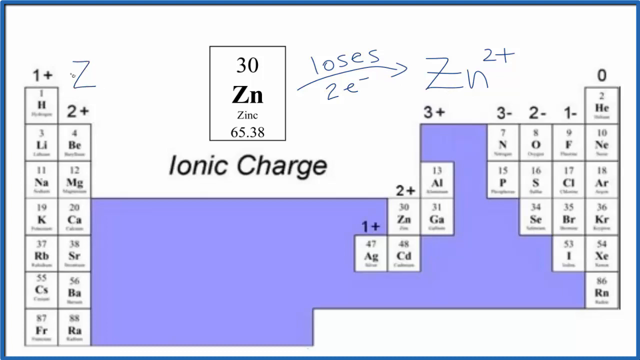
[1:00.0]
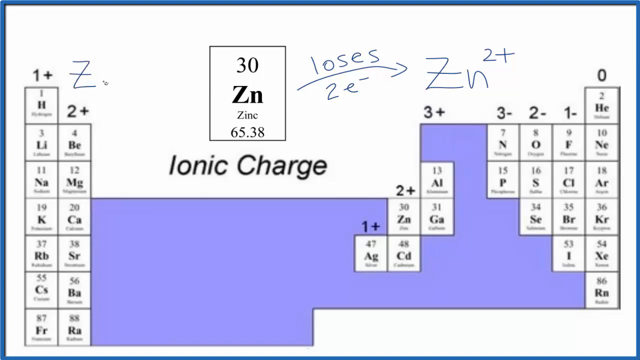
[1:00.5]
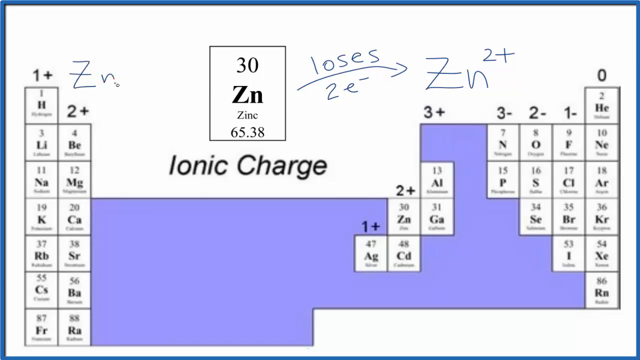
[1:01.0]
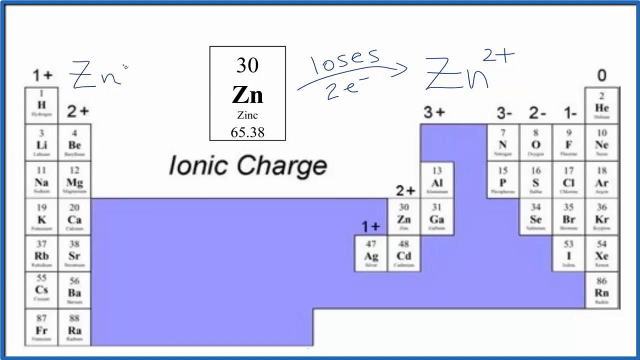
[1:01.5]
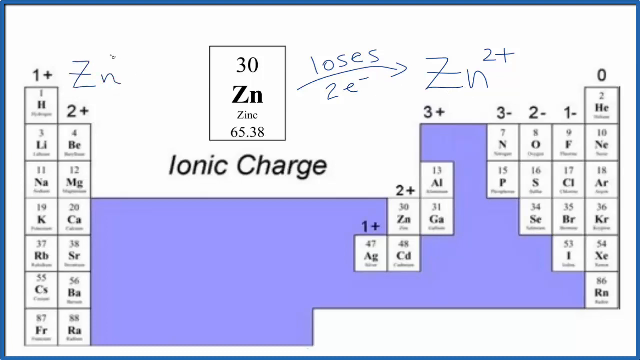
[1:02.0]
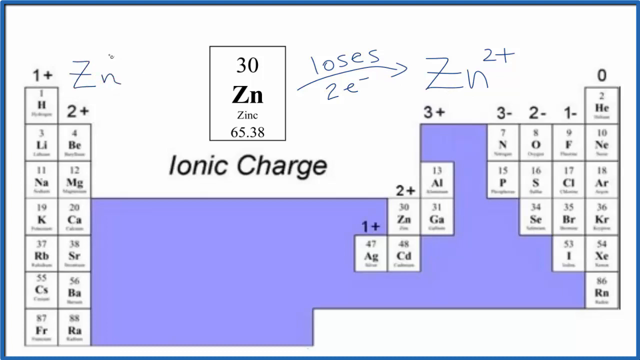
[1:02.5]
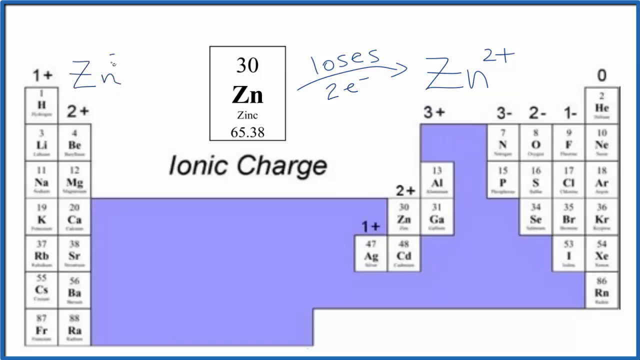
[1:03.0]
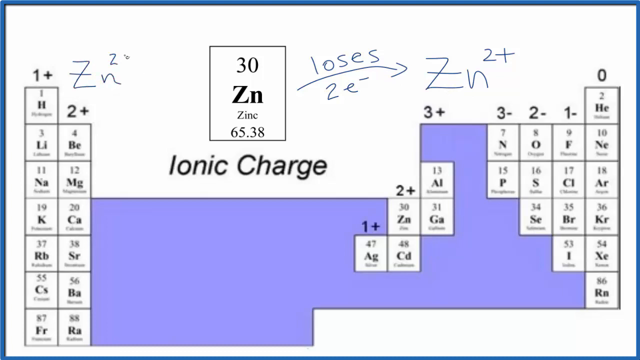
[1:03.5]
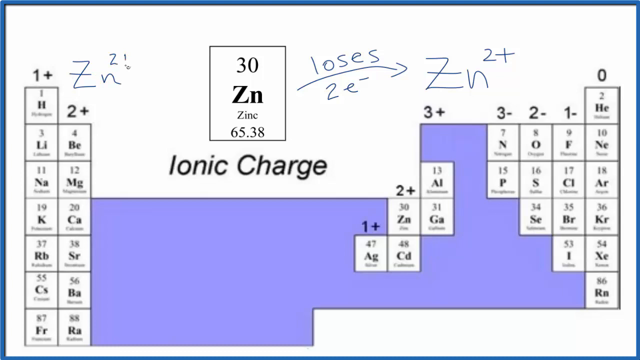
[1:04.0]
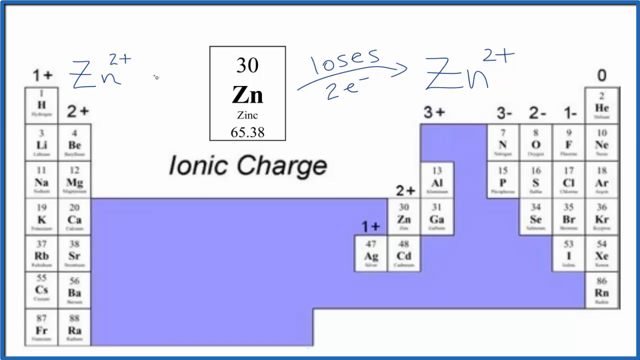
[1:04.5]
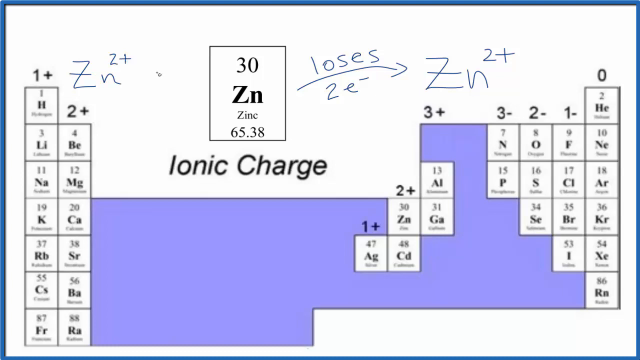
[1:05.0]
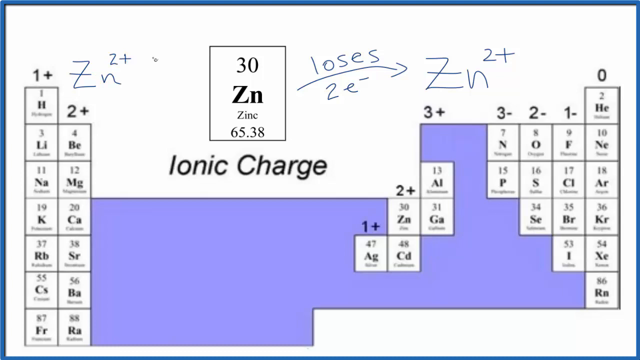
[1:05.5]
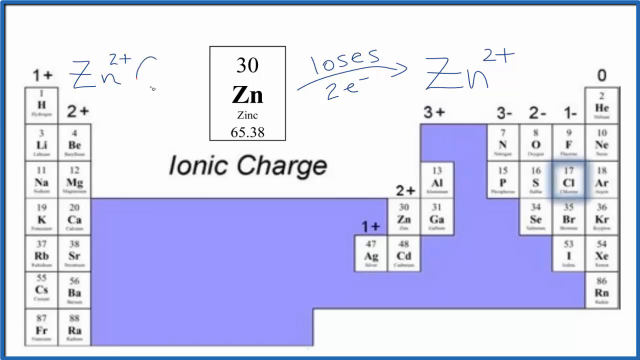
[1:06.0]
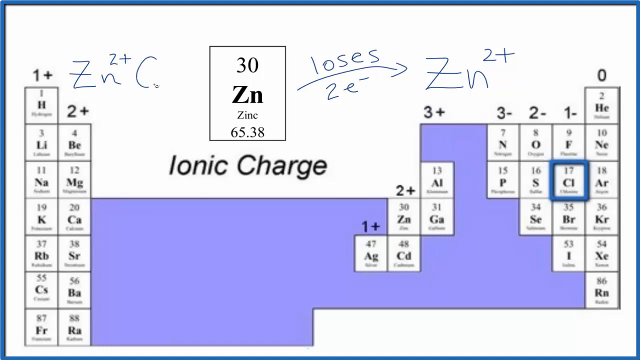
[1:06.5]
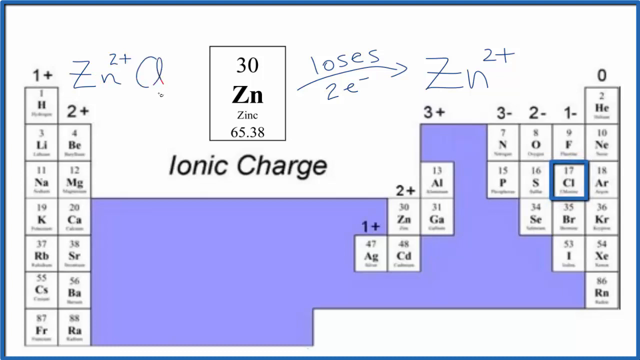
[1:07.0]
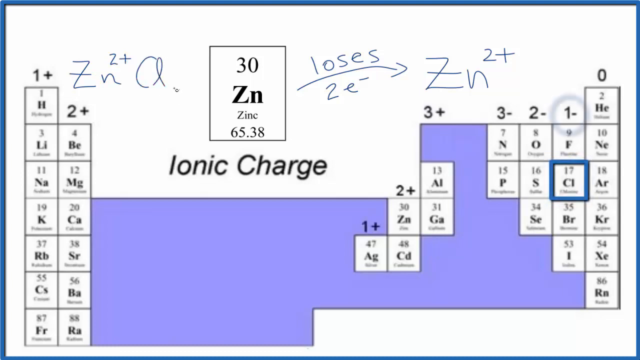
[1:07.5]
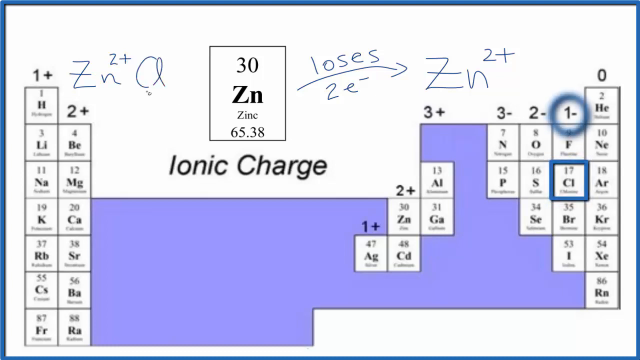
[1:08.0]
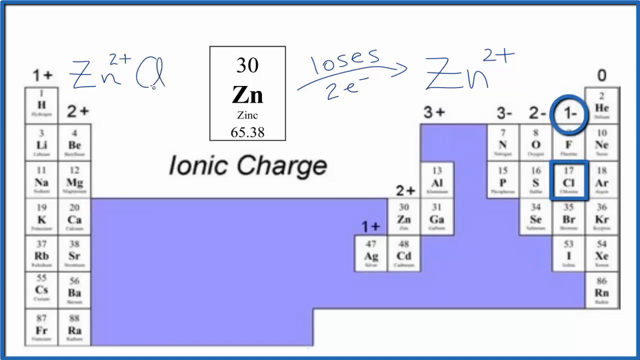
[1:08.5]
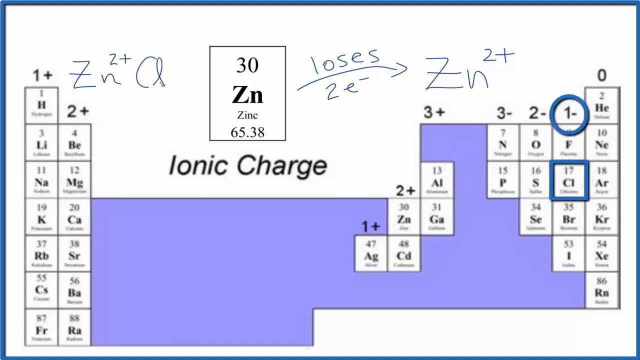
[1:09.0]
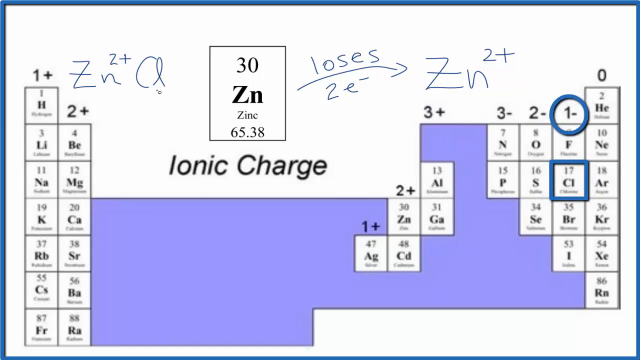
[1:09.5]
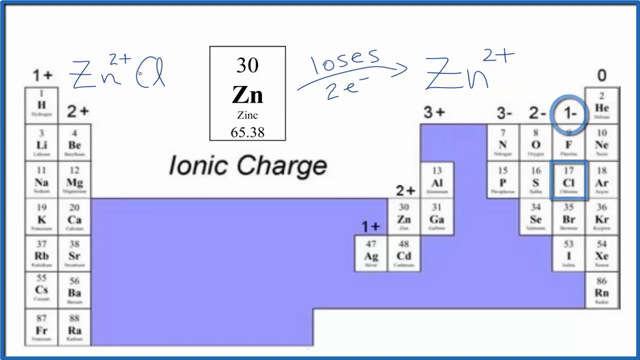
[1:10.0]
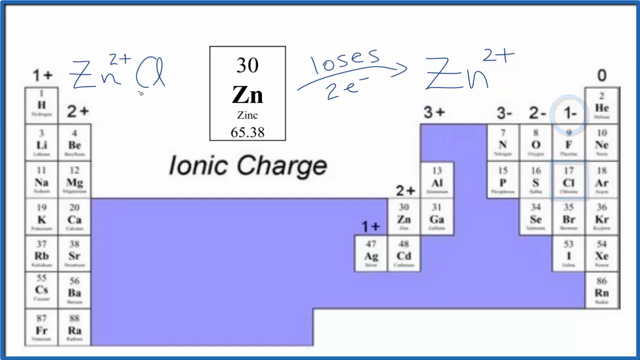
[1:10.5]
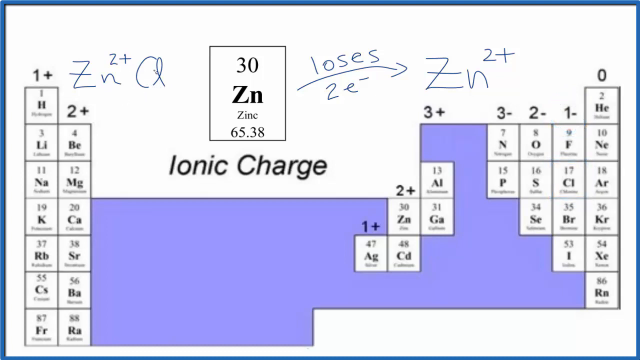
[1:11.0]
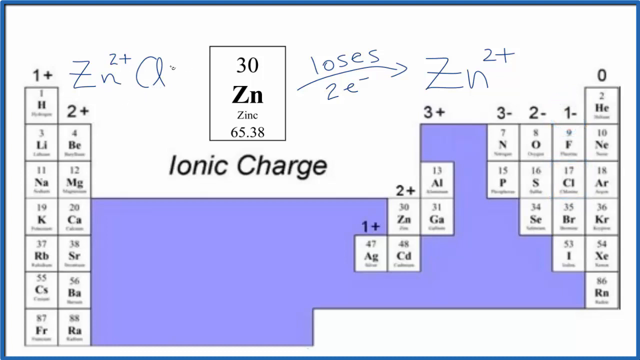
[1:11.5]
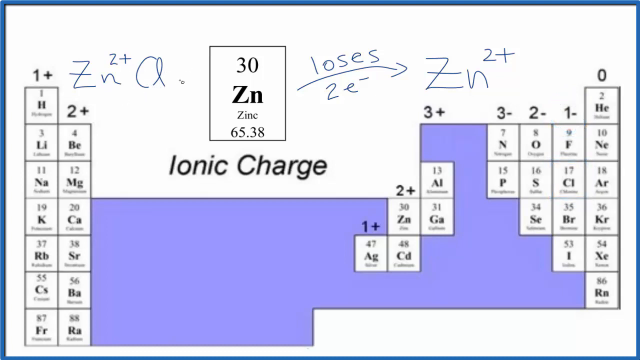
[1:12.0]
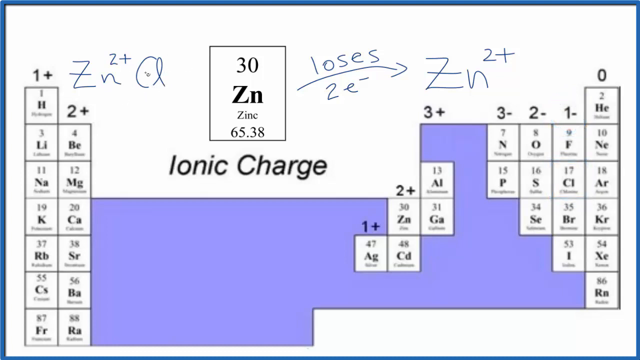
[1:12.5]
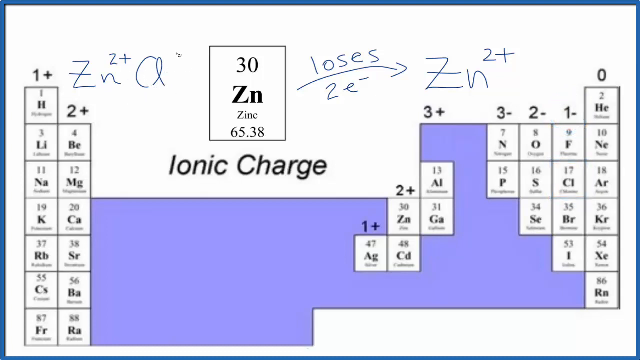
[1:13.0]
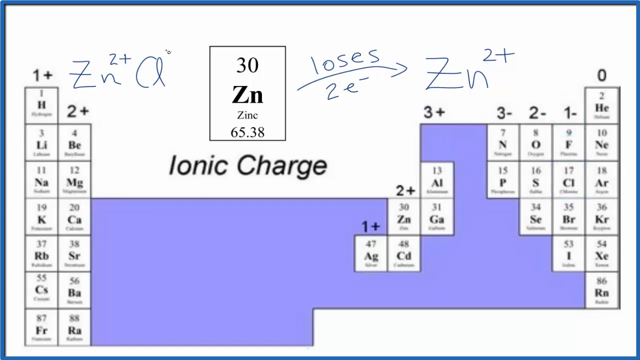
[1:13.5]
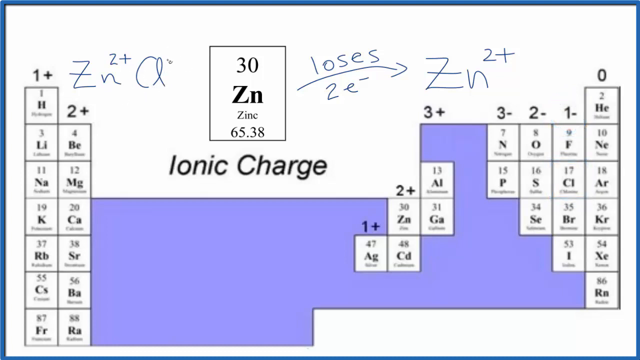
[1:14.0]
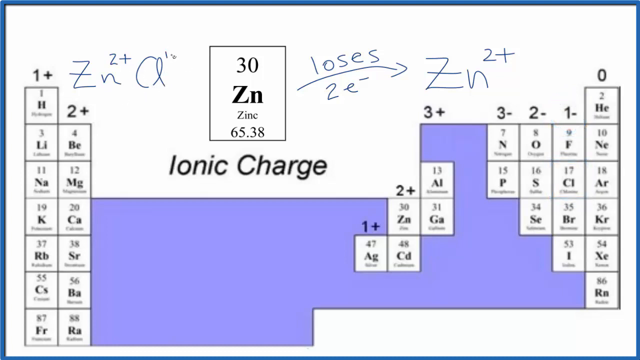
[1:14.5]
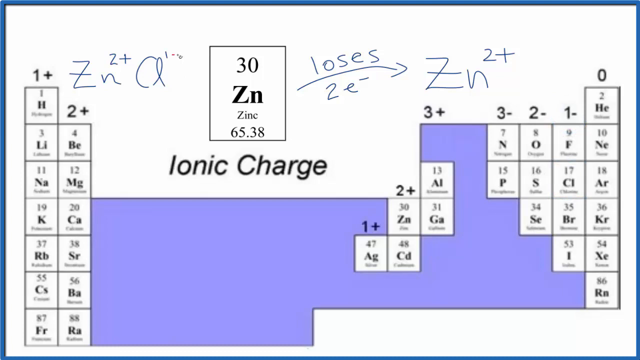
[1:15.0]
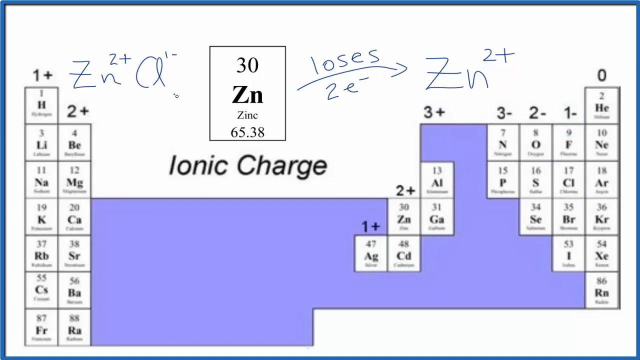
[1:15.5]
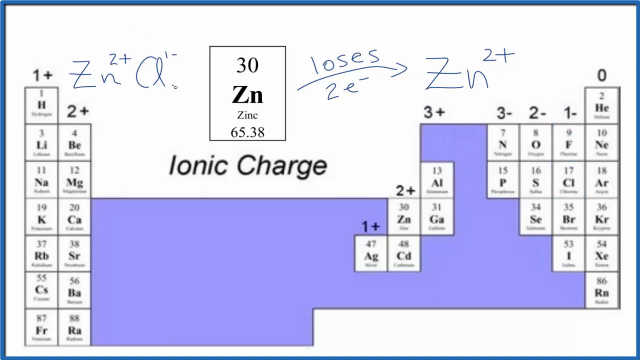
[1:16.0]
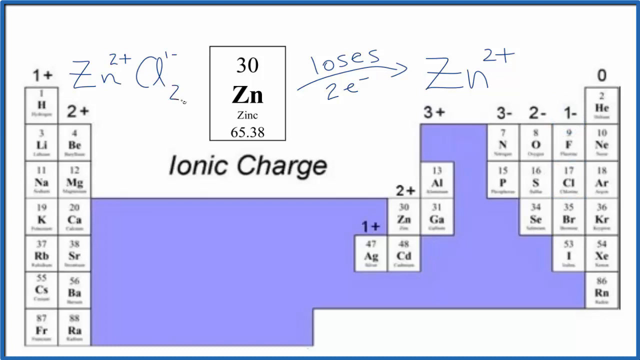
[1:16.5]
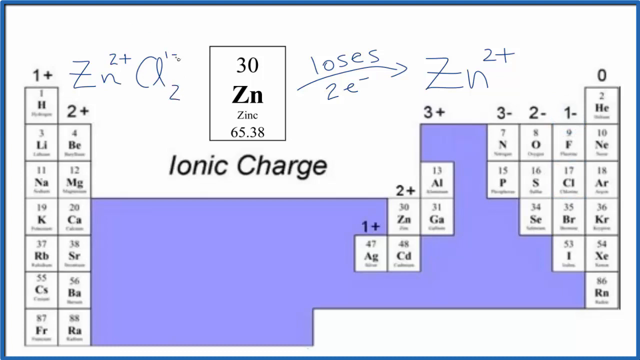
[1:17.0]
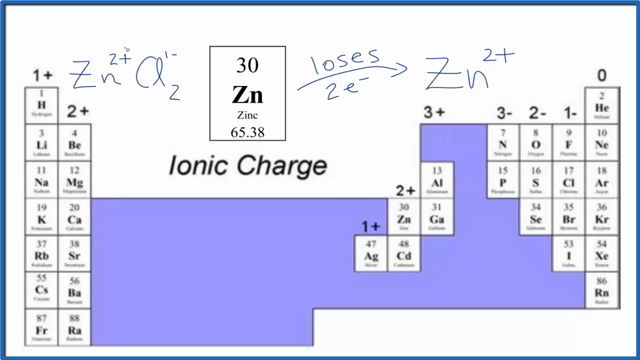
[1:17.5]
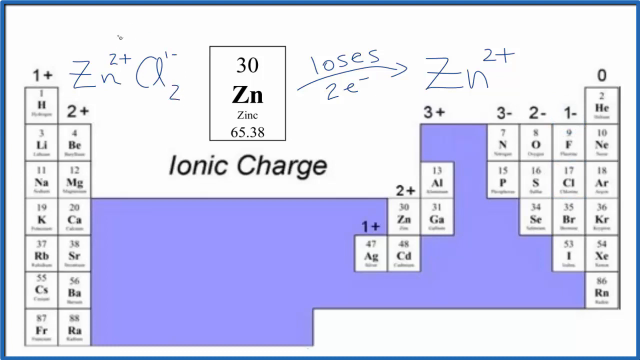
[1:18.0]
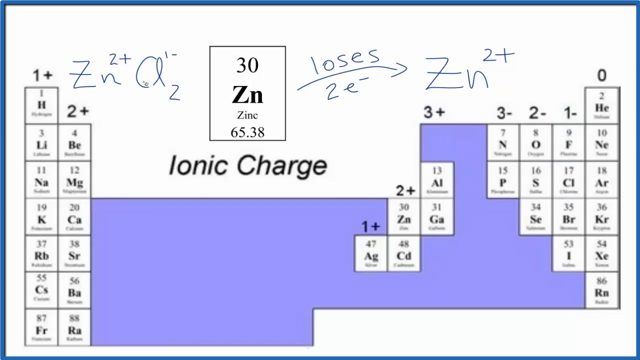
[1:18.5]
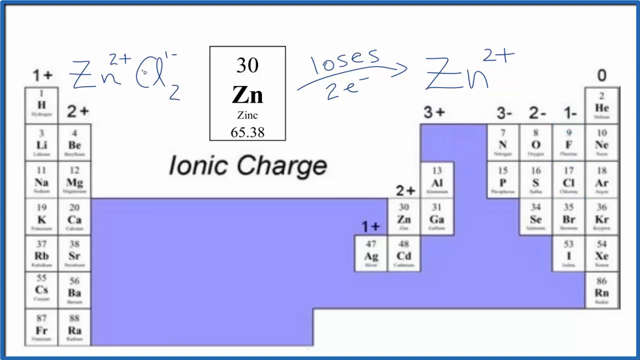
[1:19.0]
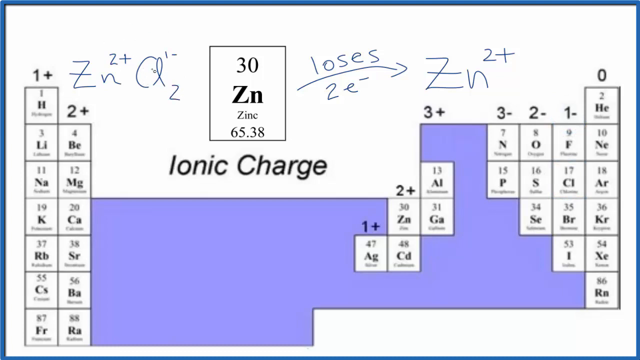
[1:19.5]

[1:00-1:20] On the right-hand side of the screen, a blue bordered box now surrounds one of the boxes. The right-hand column has six boxes going vertically down the screen, and next to it on the left are four boxes going vertically down, attached to the right-hand boxes. Two boxes down from there is the box now highlighted in blue. In the top left corner of the screen, new writing appears: "ZN2+" is being written. The box on the right-hand side then disappears, and the blue lines are no longer there. The writing in the top left corner continues, and "A1/2" is written on the board.